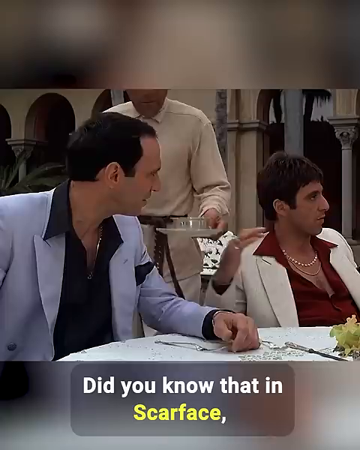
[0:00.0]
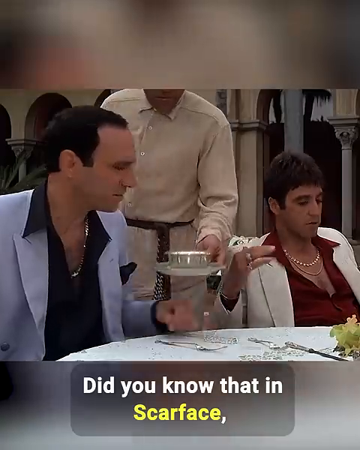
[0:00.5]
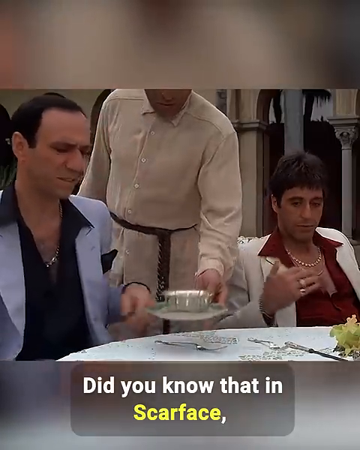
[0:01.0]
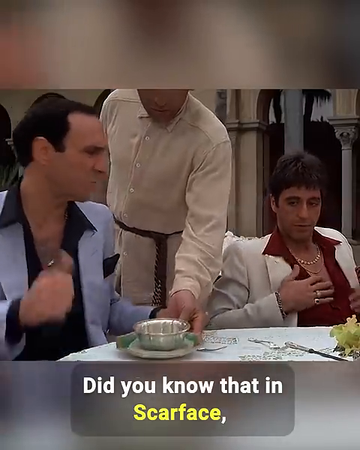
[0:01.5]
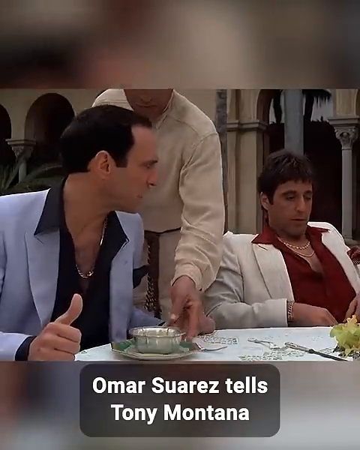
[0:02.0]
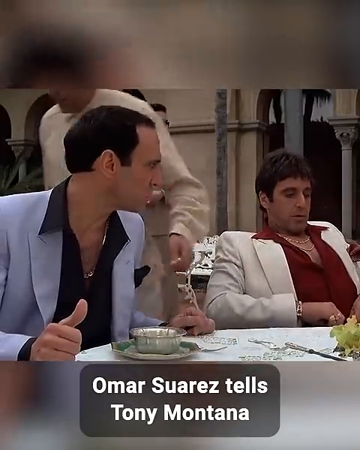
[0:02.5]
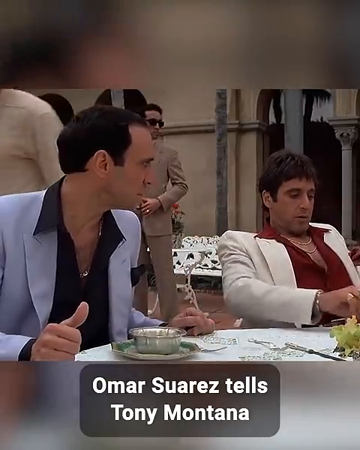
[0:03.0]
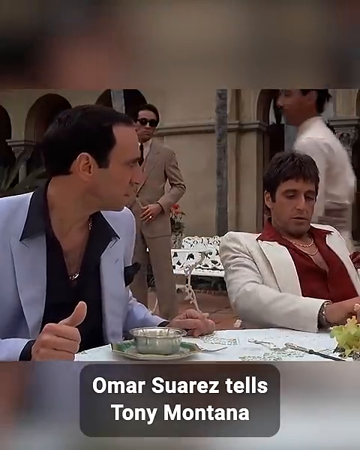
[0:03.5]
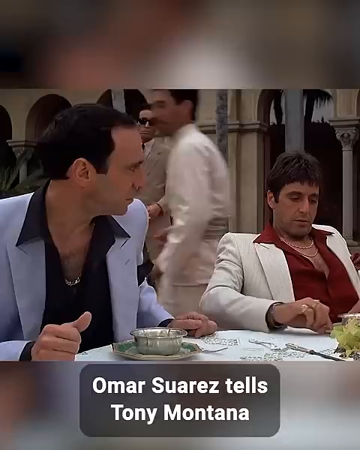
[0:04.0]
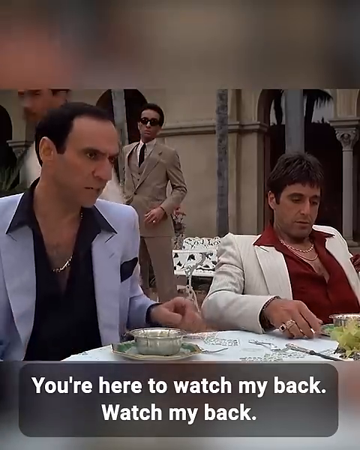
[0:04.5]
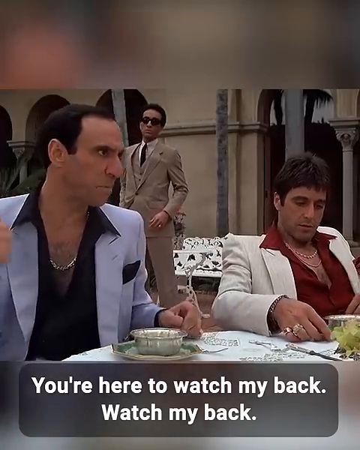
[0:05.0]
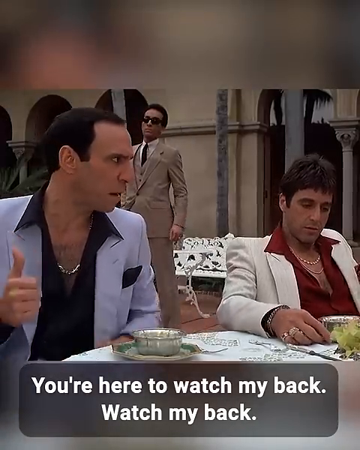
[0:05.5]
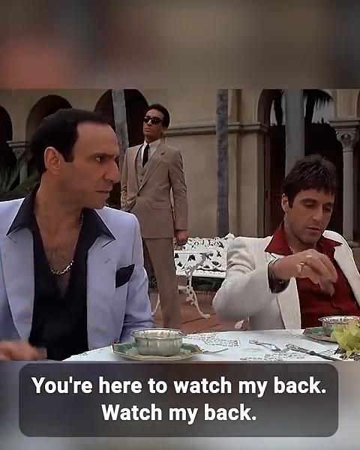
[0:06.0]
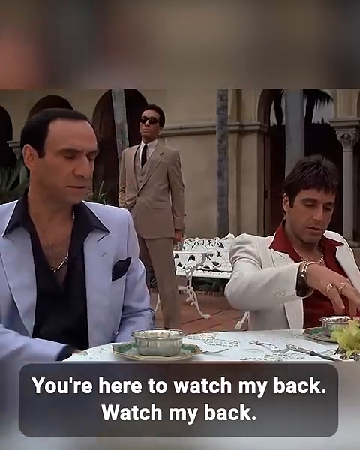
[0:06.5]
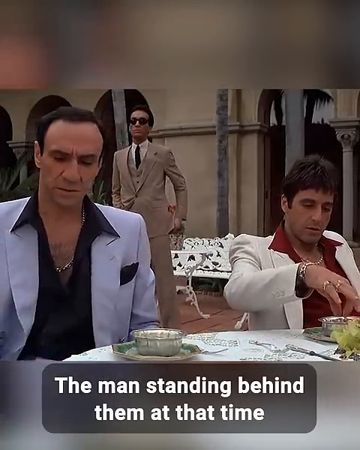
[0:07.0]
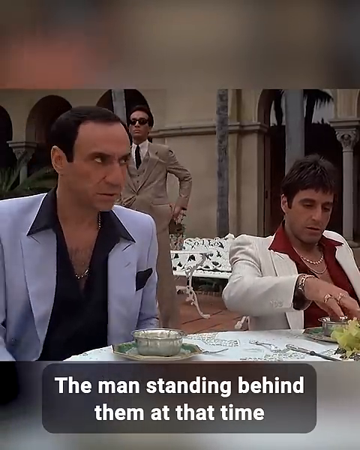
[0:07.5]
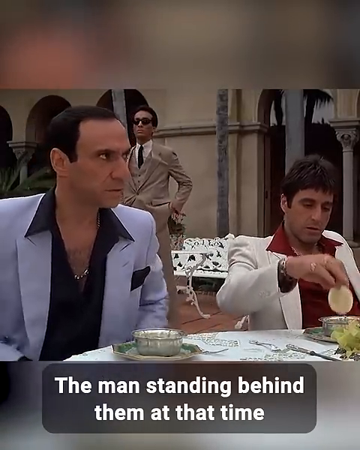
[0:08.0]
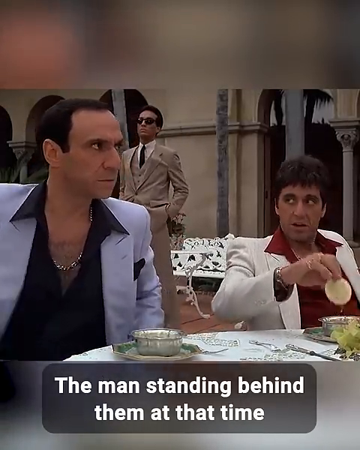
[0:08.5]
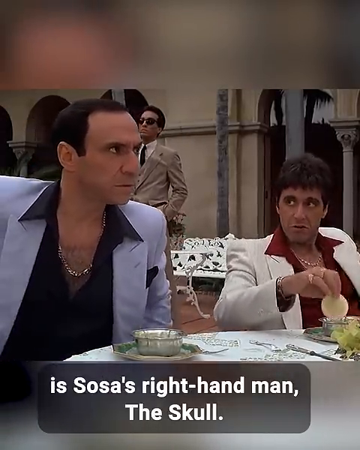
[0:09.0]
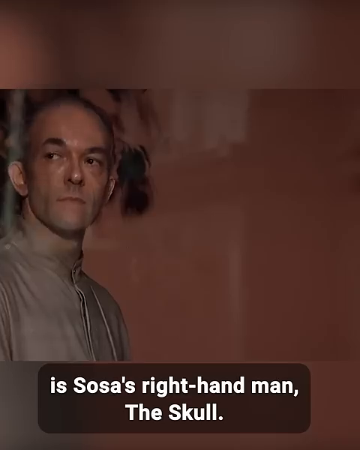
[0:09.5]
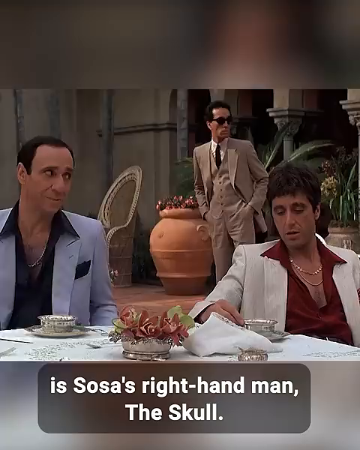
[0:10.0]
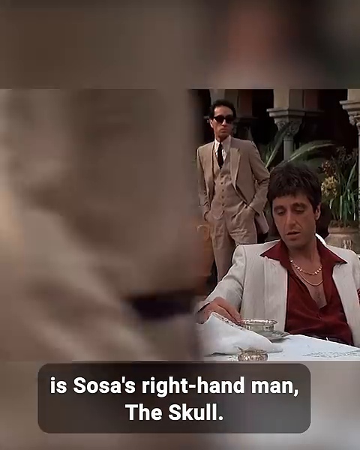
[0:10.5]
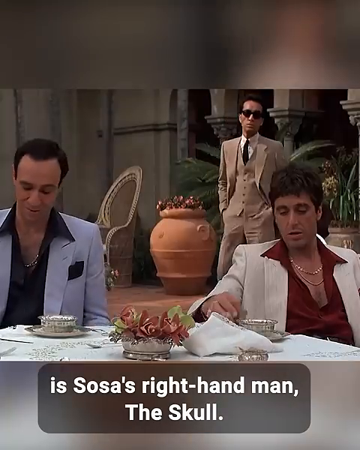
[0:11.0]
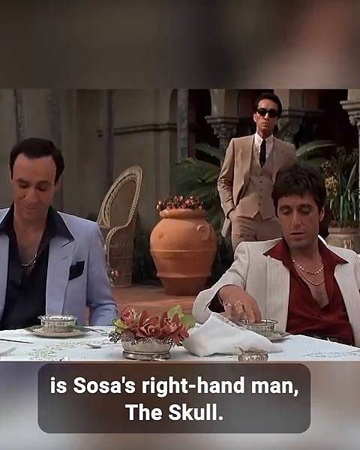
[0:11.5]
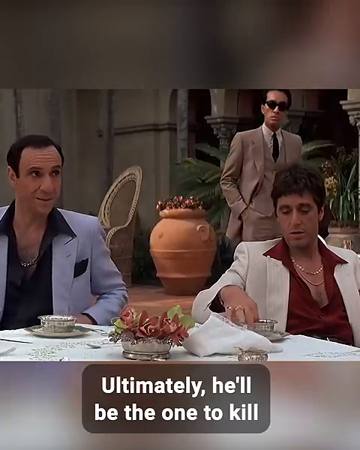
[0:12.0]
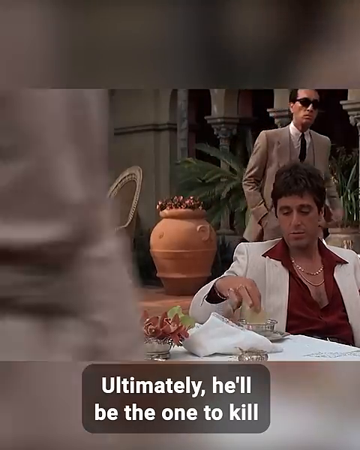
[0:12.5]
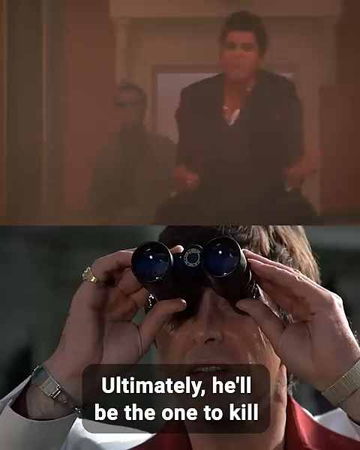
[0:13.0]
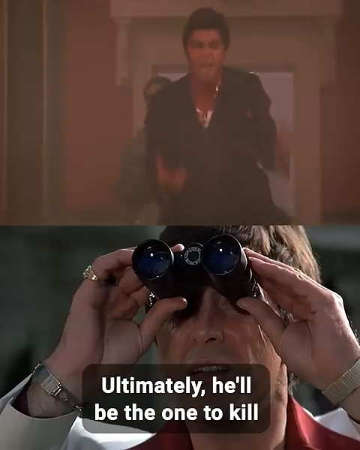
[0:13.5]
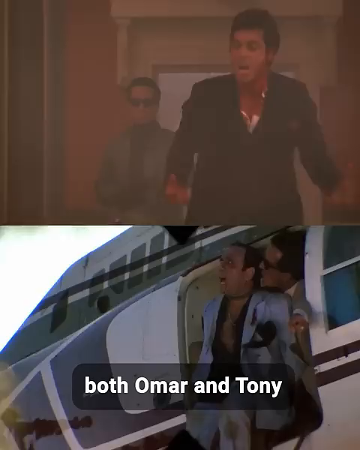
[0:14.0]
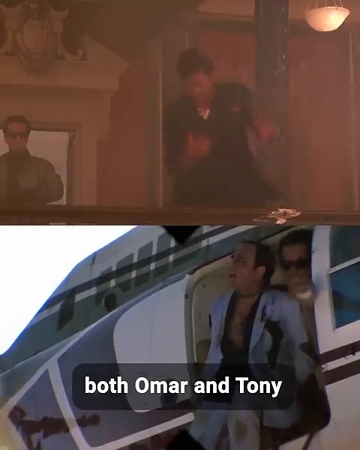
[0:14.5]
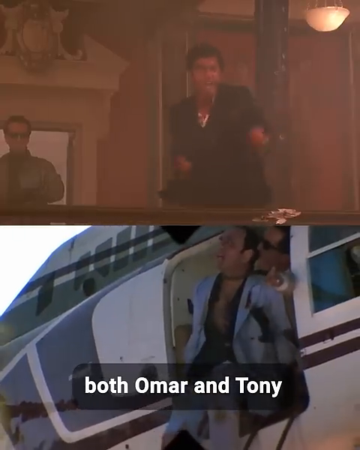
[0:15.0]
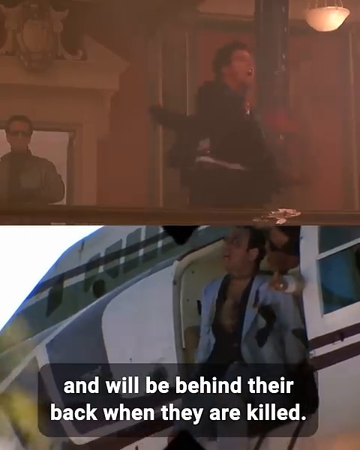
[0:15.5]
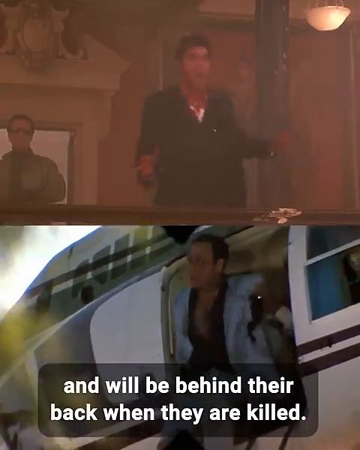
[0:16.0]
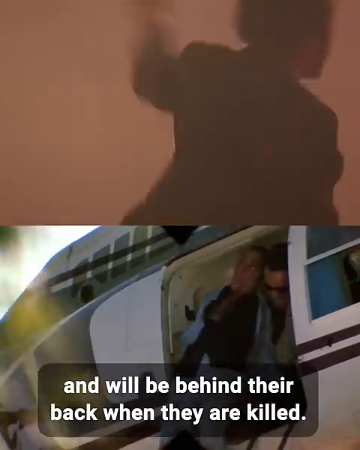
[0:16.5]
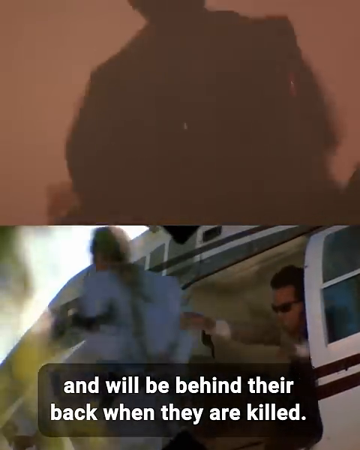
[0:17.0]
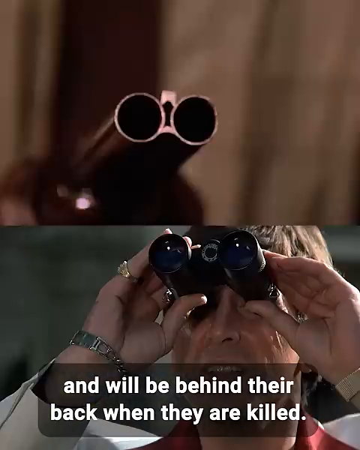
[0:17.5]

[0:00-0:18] Two well-dressed men are at a restaurant, eating and talking together; they seem to be plotting something and look like gangsters or members of some sort of Italian mafia. There are three people in the video, and some people walk by as well. In the back, a guy in a suit with shades on is kind of watching. At one point the scene changes to a split view: somebody is being thrown out of a helicopter on the bottom, and some people are fighting on the top. This looks like the same people from the restaurant scene but in the future, and they seem to be fighting each other and trying to kill each other.